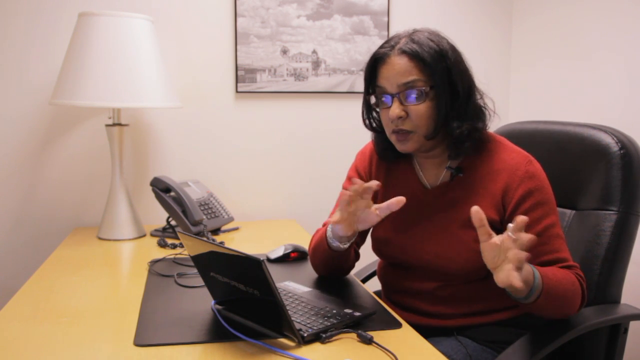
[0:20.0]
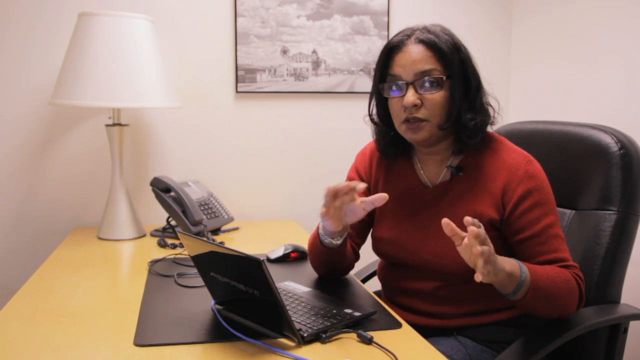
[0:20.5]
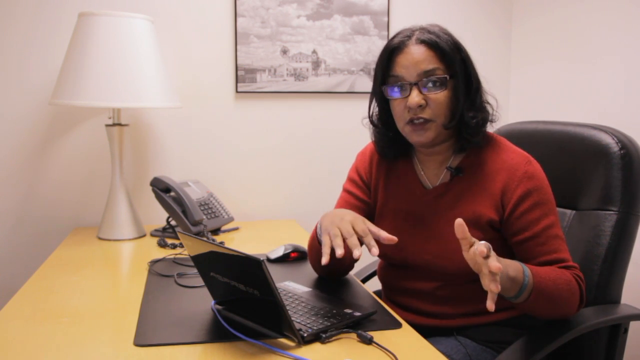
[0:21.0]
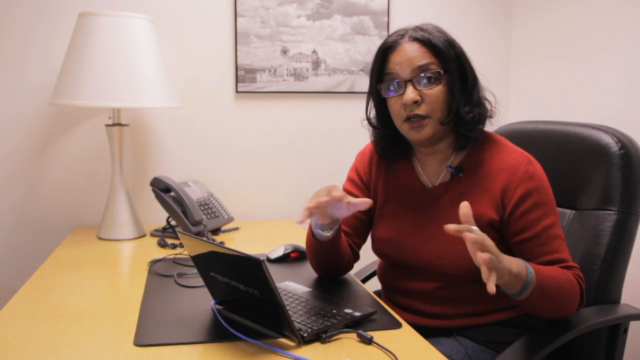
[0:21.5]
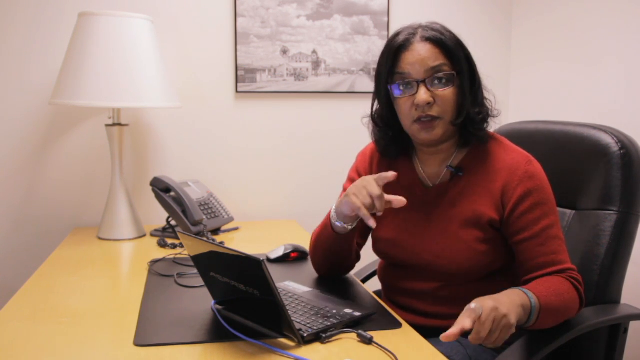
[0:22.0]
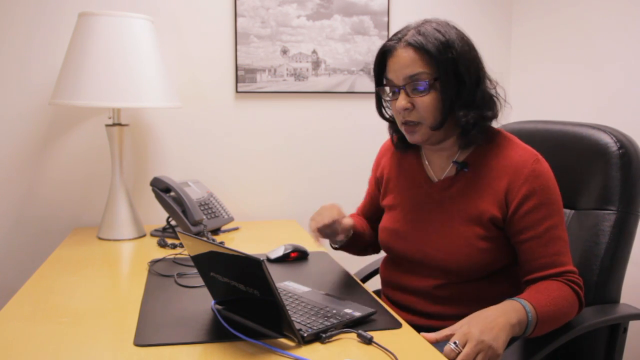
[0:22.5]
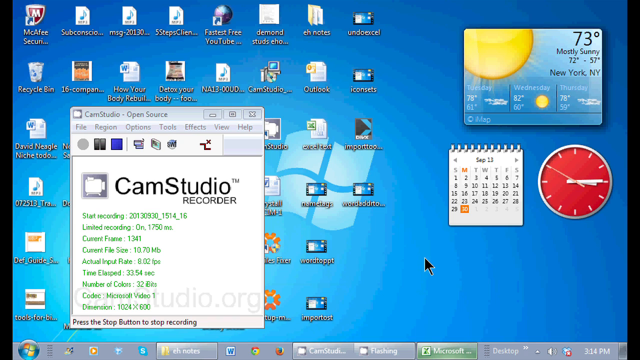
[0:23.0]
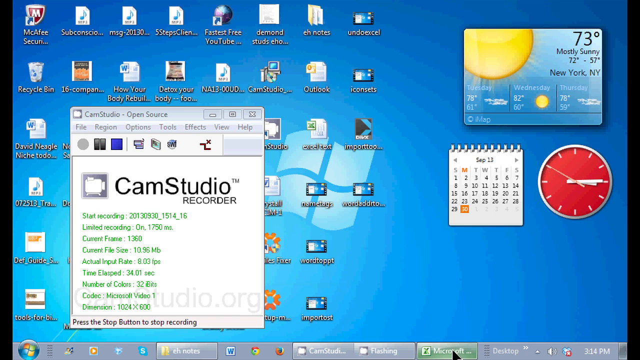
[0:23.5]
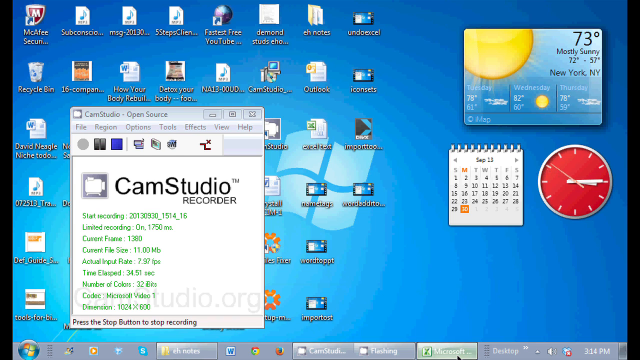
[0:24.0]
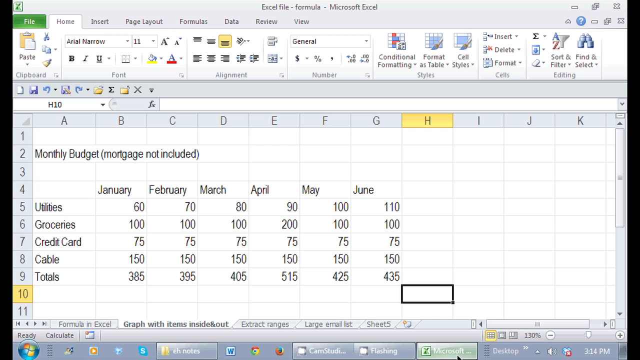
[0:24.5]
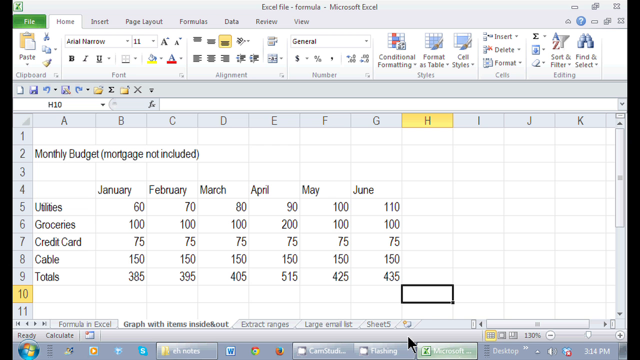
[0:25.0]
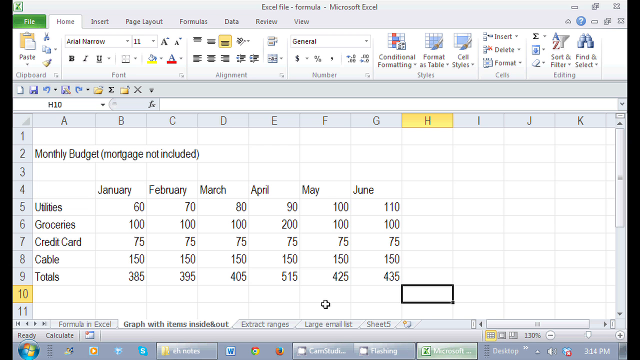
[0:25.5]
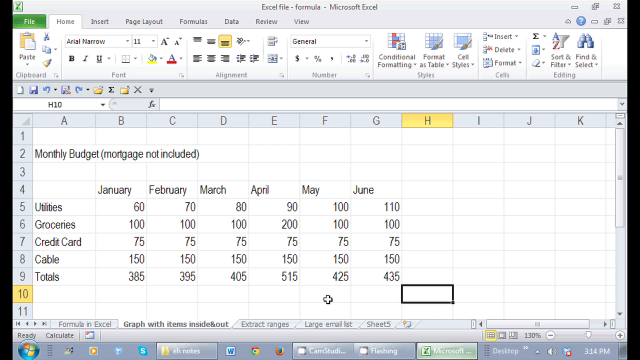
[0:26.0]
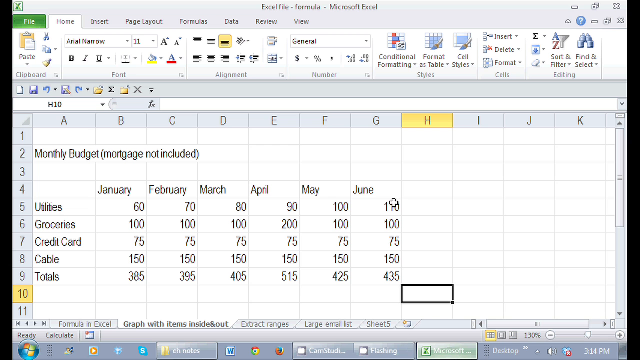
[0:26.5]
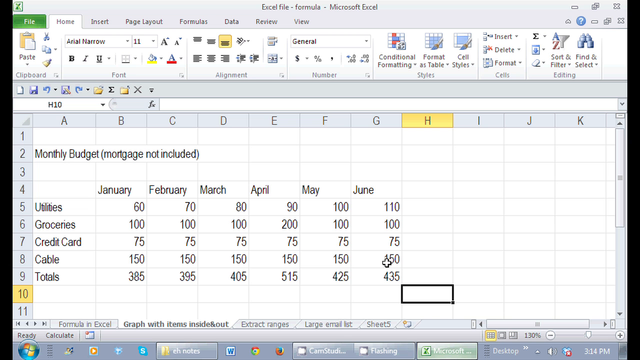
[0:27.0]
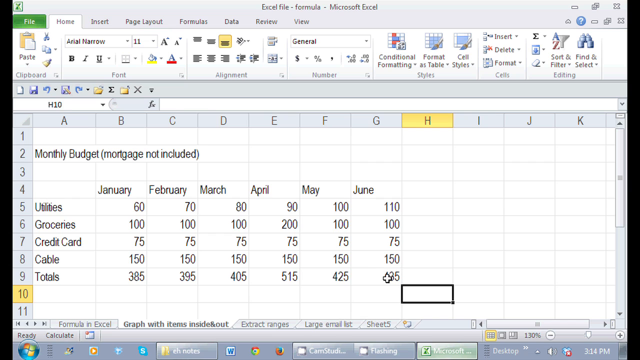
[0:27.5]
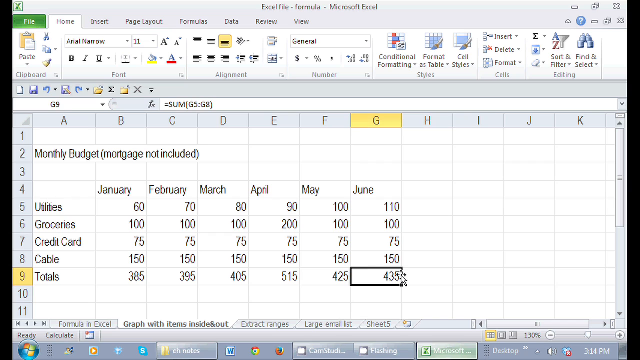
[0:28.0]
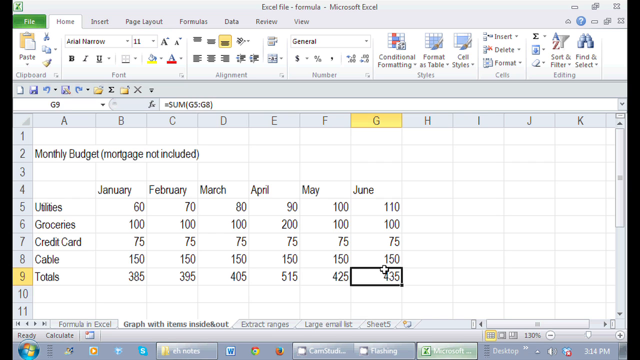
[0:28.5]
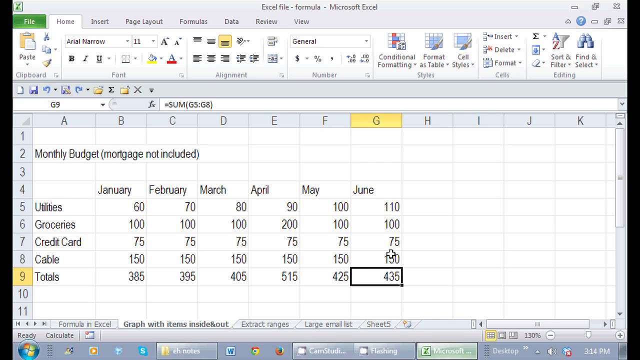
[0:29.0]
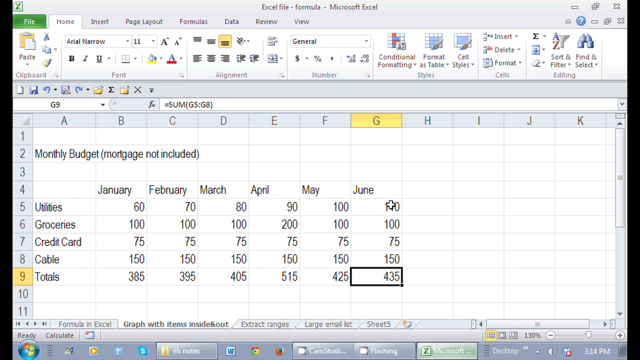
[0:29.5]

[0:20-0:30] The woman in business casual attire in the office continues talking to the camera, then turns to the laptop on her desk, and the view switches to her computer screen. A typical computer desktop appears with apps, calendars, clocks and the weather, along with an open window called Cam Studio Open Source that seems to contain tools for a Cam Studio recorder to record her screen. The view then switches to Microsoft Office Excel, where a spreadsheet is open with "monthly budget" as a header and months with numbers for categories such as utilities, groceries, credit card, cable and totals. She goes over some of the totals and numbers on the sheet.